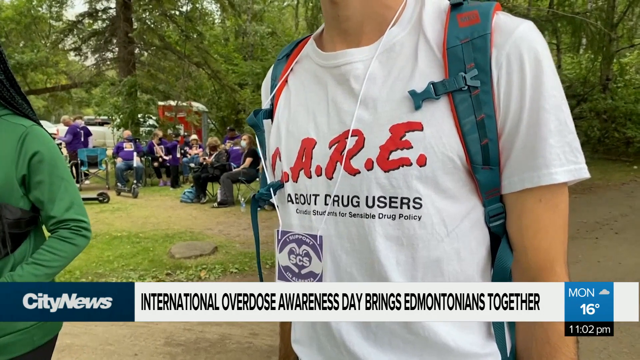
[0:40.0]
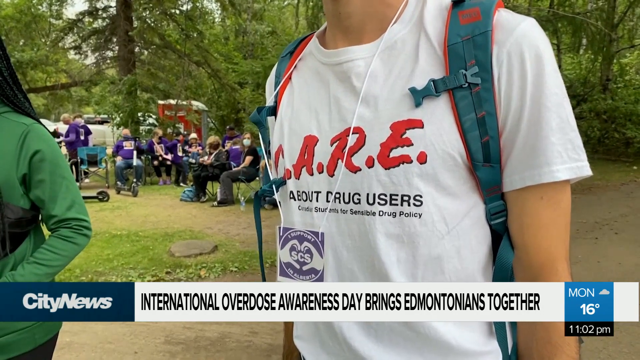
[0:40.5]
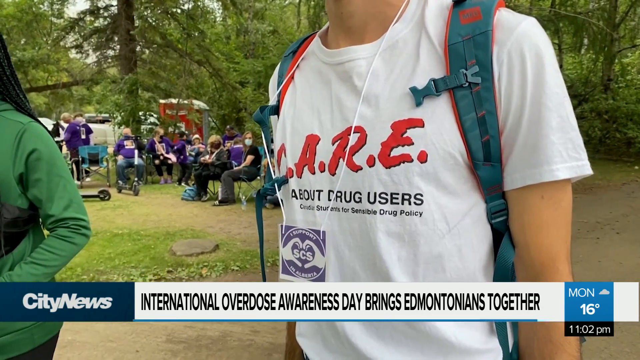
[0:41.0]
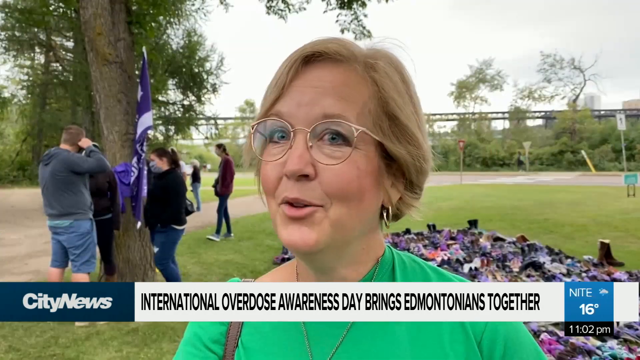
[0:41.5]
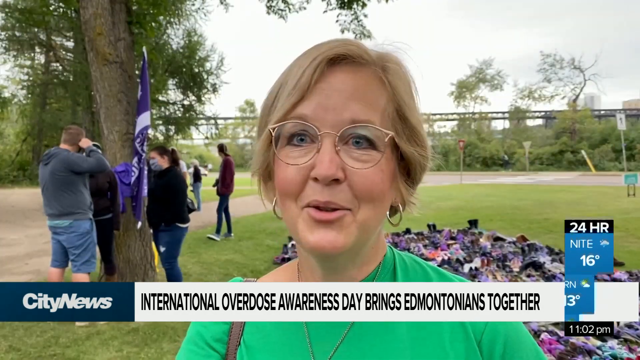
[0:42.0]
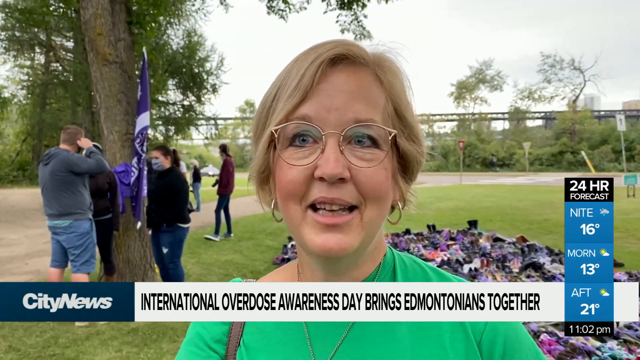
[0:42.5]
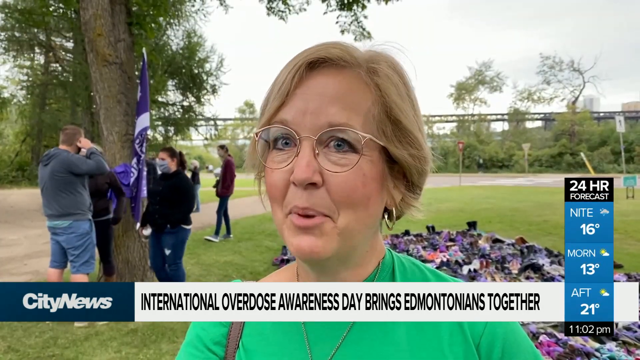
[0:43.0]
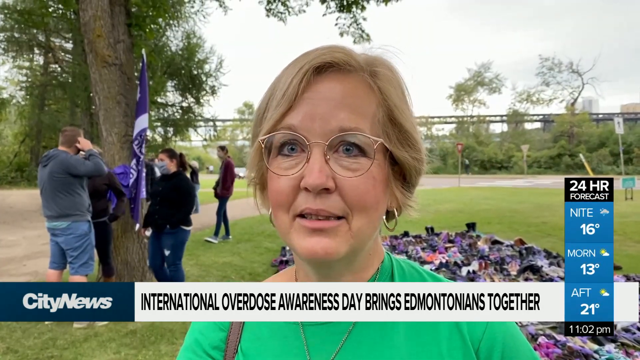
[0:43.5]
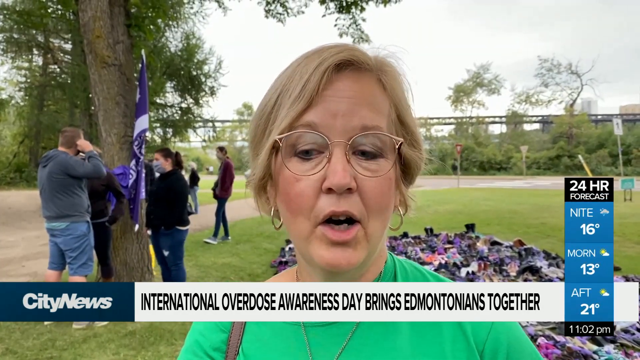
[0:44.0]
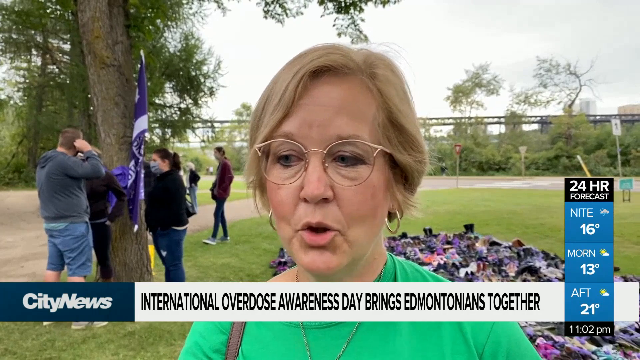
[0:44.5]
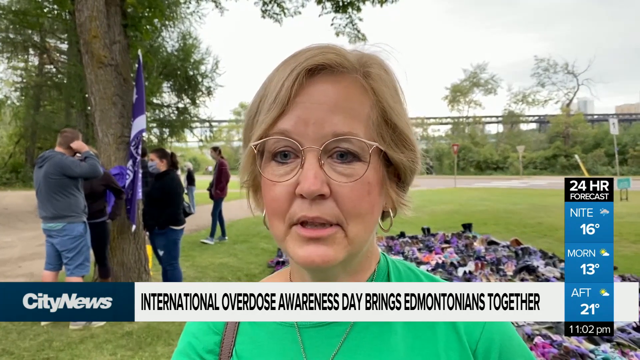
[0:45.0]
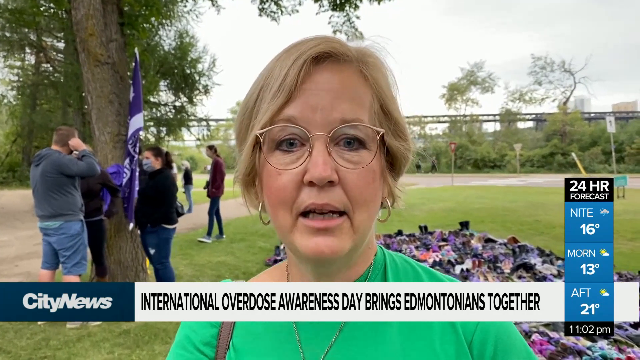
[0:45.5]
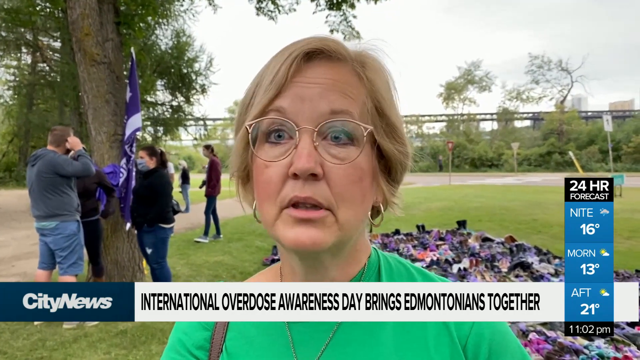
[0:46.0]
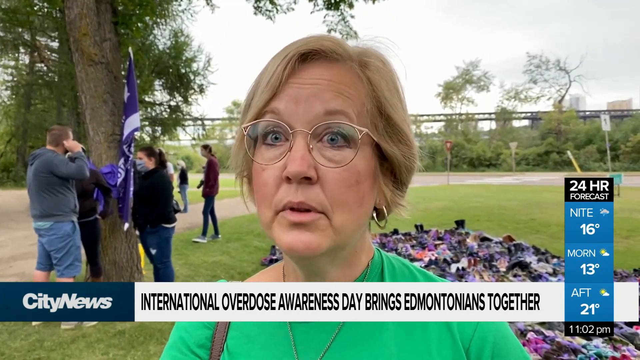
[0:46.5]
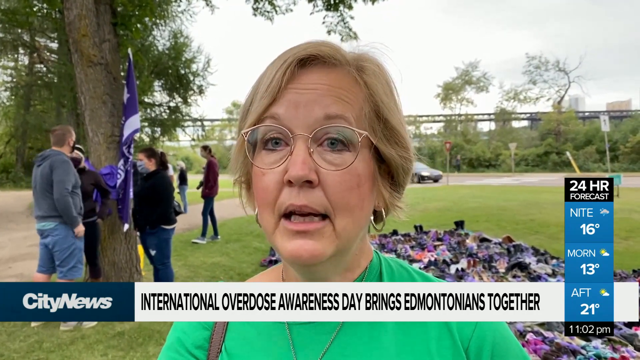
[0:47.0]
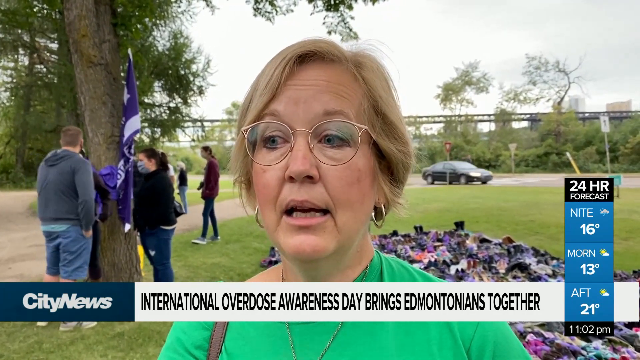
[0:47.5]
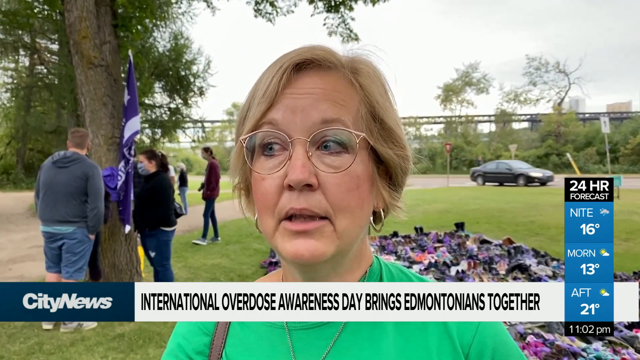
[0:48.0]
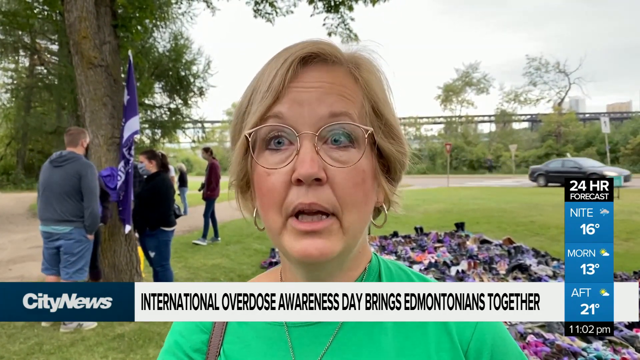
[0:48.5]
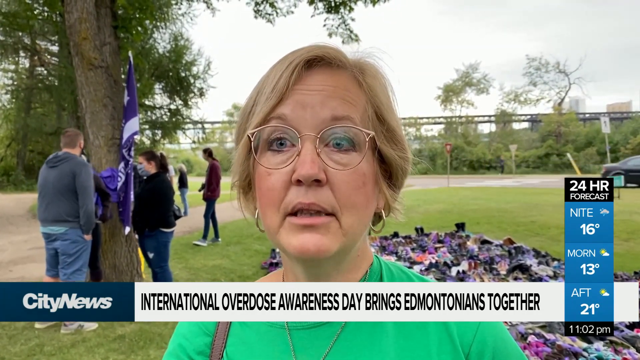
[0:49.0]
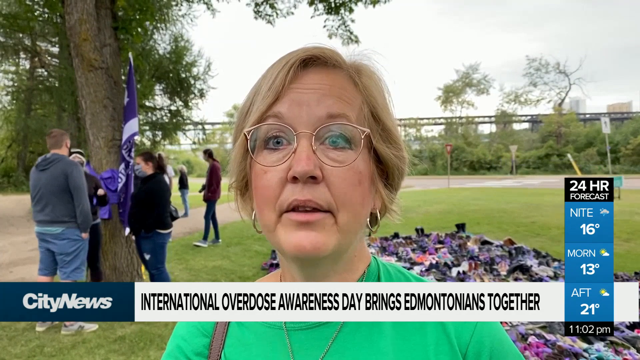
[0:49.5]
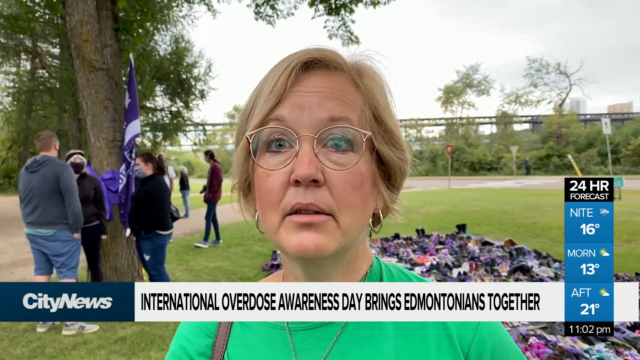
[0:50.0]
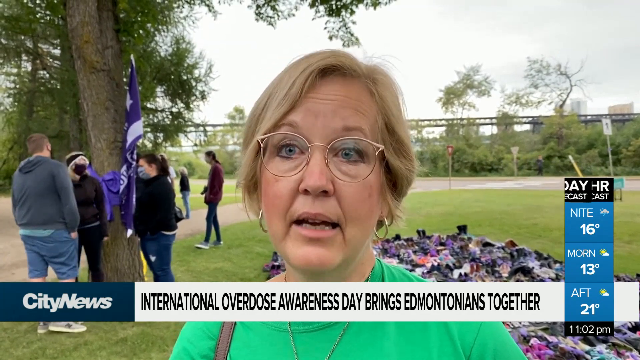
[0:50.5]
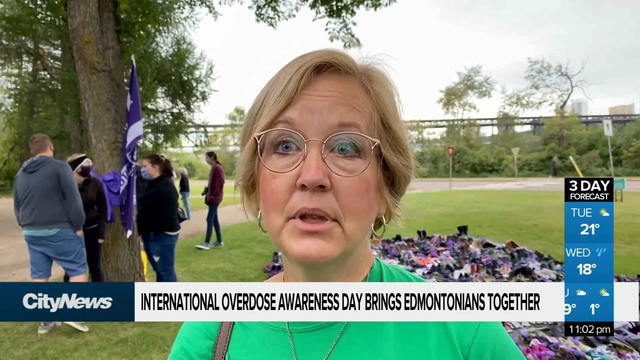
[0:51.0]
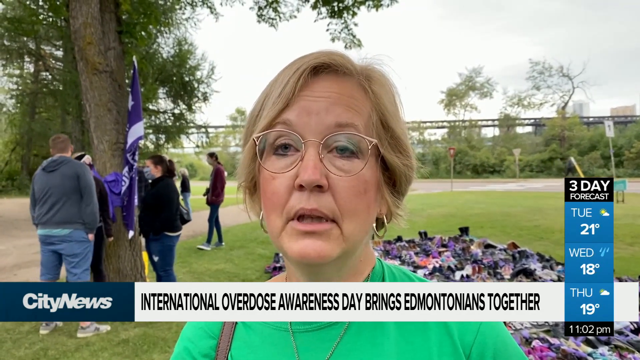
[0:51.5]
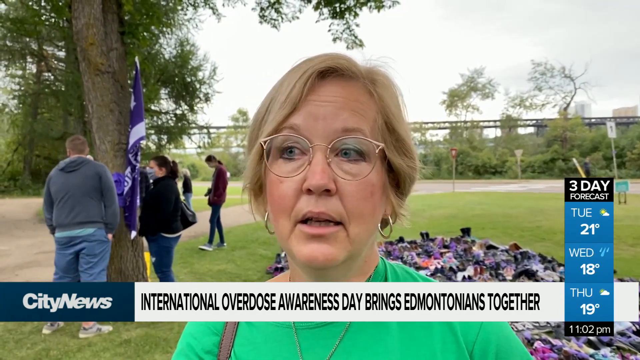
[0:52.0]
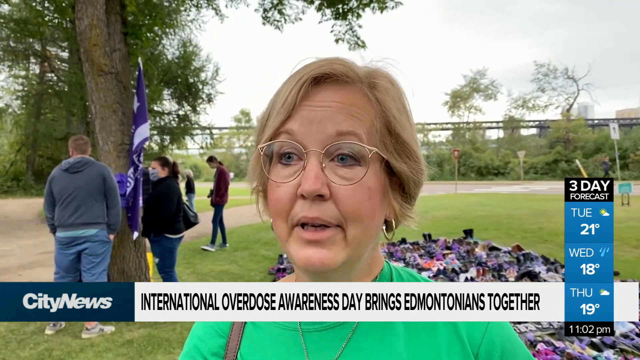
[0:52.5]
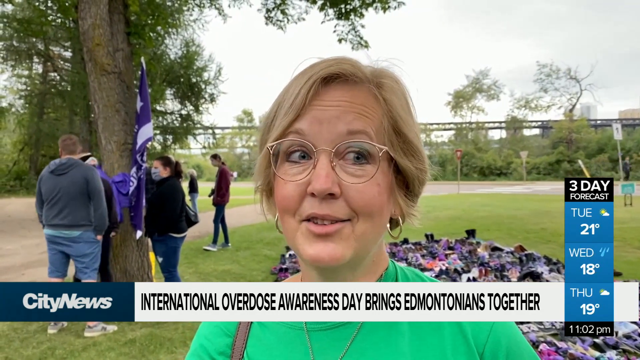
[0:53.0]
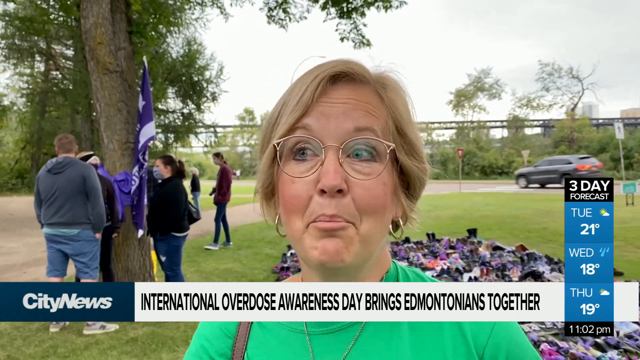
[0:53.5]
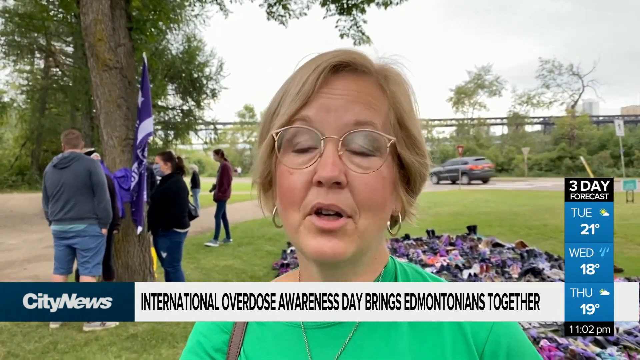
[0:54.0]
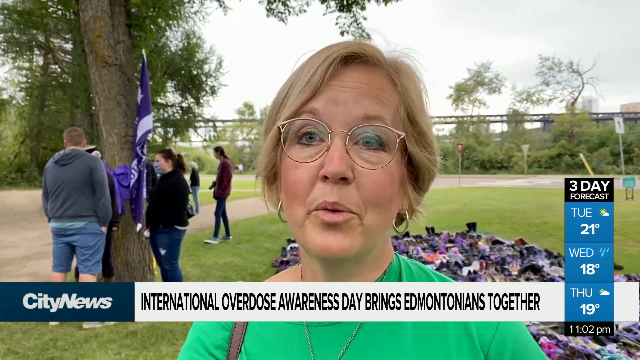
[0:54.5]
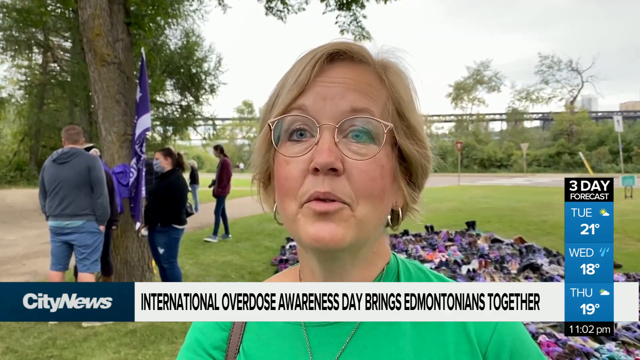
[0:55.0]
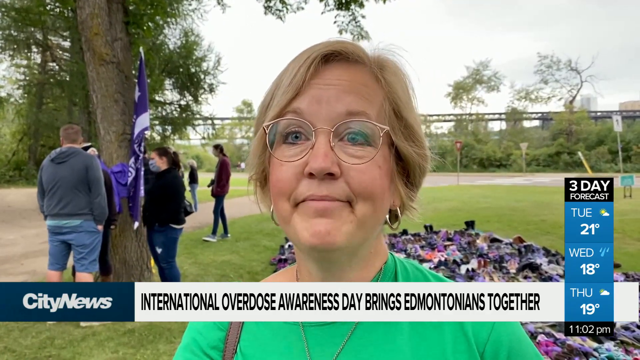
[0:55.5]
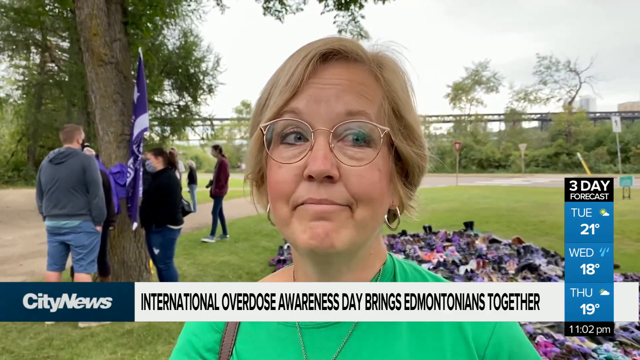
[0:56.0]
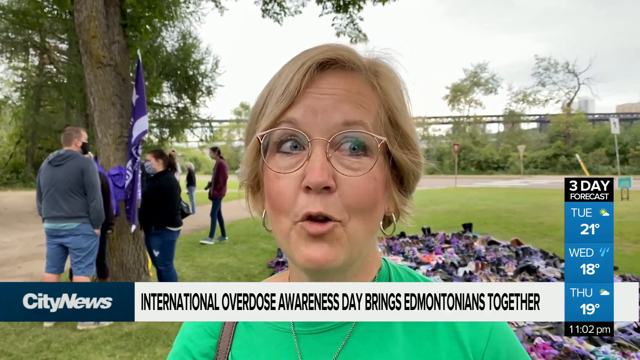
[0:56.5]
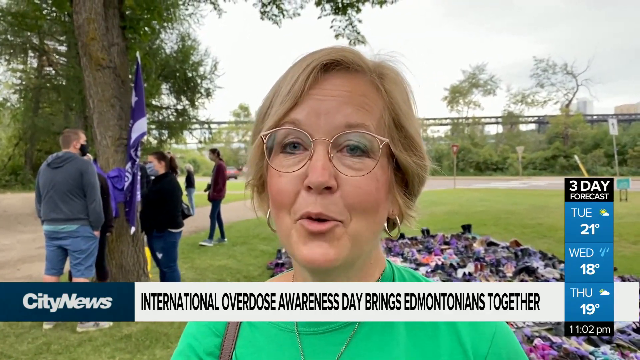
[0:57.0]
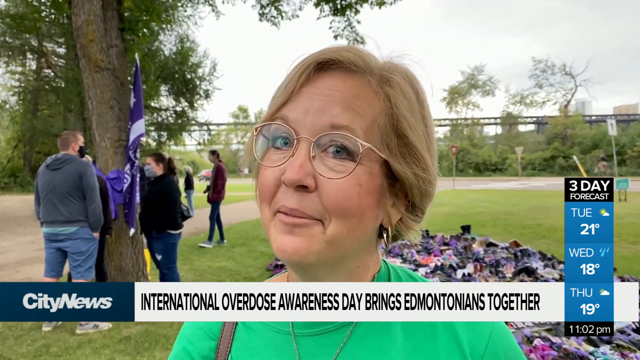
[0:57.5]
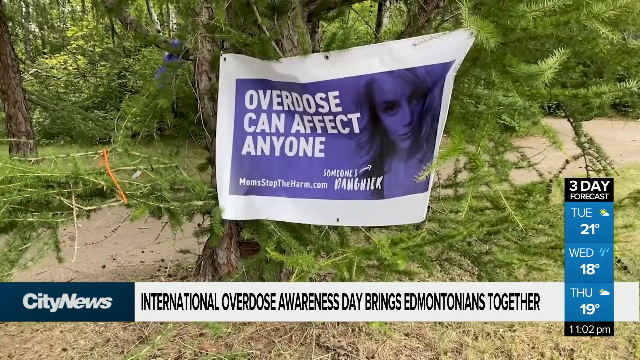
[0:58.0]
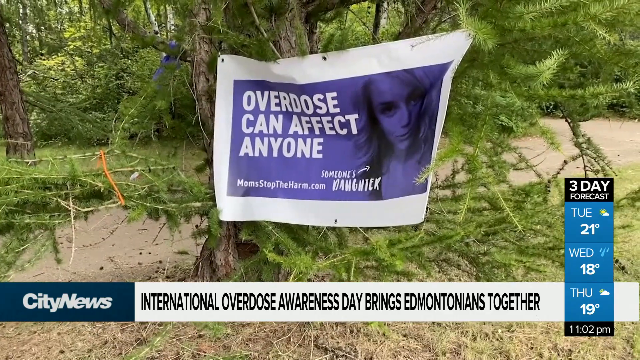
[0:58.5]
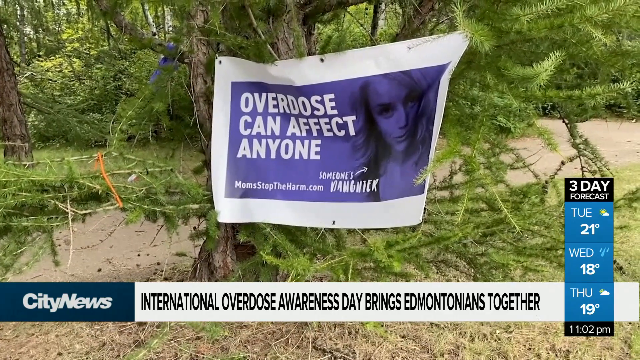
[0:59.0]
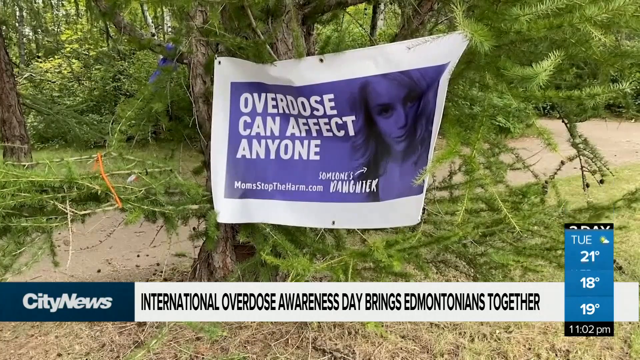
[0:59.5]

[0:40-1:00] A woman faces the camera, dressed in a green t-shirt and wearing a necklace and glasses, with a handbag at the side of her shoulder. She is talking and seems to be explaining something. A City News ticker below reads "International Overdose Awareness" and that it brings Edmontonians together. On the right side of the screen is weather information: a 24-hour forecast showing 16 degrees on Monday, 13 degrees and 21 degrees, with the time at 11:02 p.m., and a three-day forecast of Tuesday 21 degrees, Wednesday 18 degrees and Thursday 19 degrees. While the woman talks, some people stand at the back near a tree, holding something like a flag and wearing different types of clothes. The camera focuses on a t-shirt with "Eric Gattas" written on it. A purple banner is shown with the words "overdose can affect."